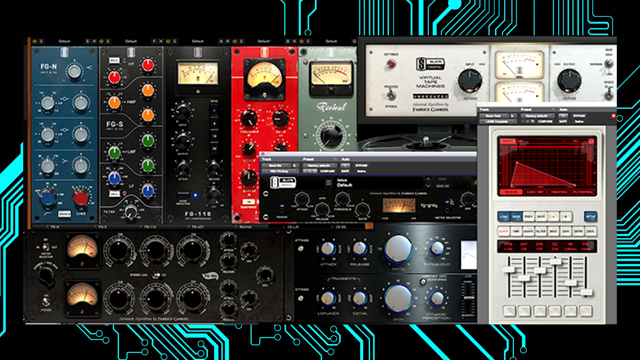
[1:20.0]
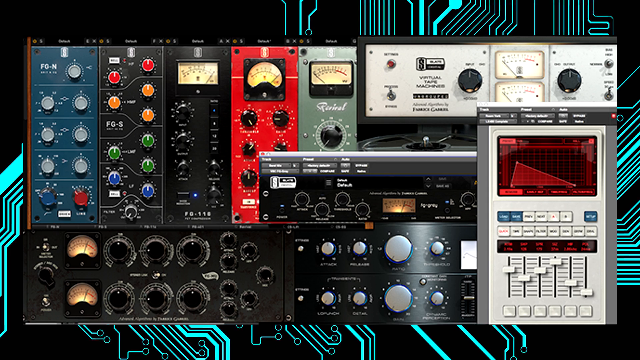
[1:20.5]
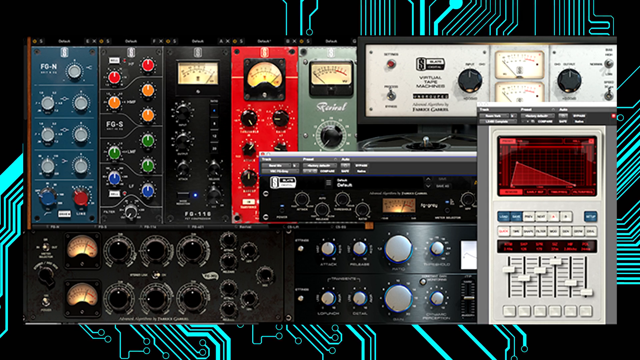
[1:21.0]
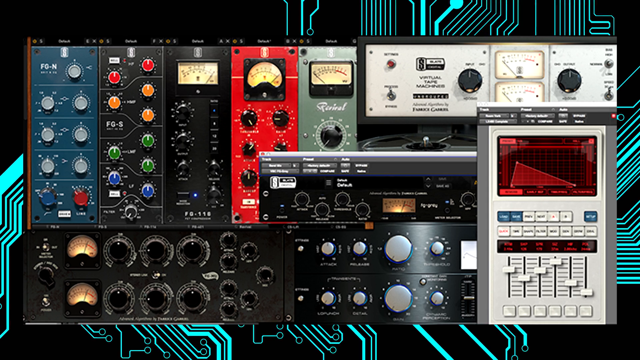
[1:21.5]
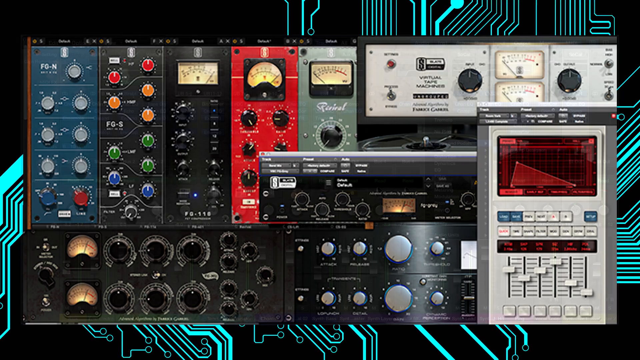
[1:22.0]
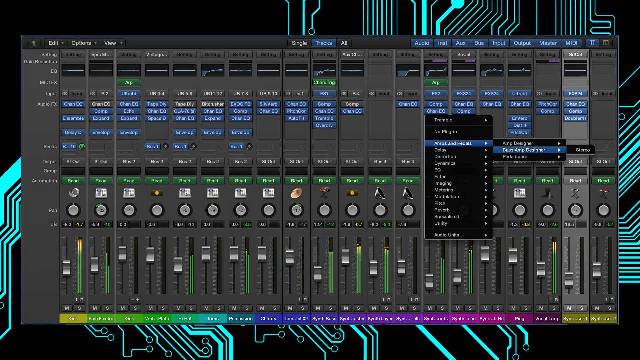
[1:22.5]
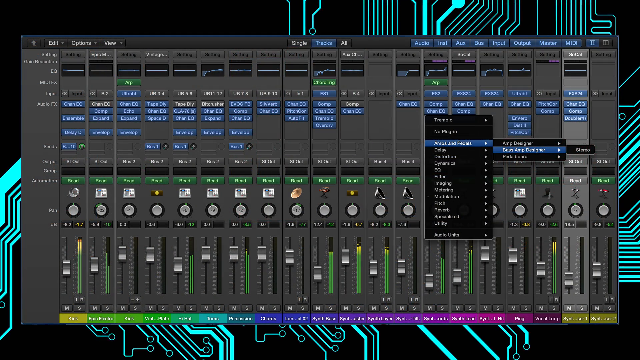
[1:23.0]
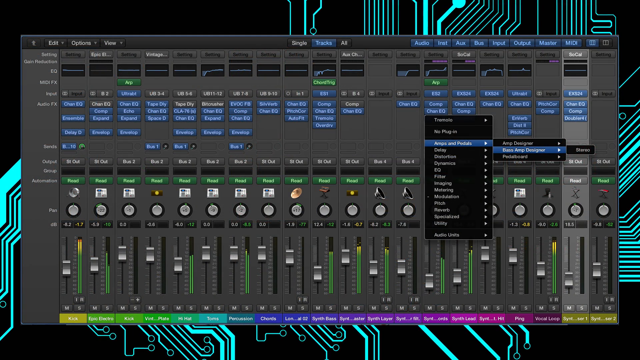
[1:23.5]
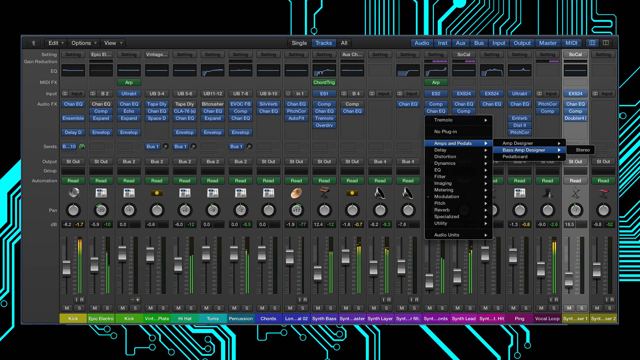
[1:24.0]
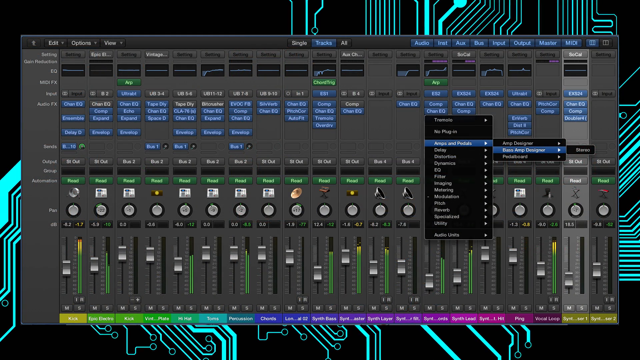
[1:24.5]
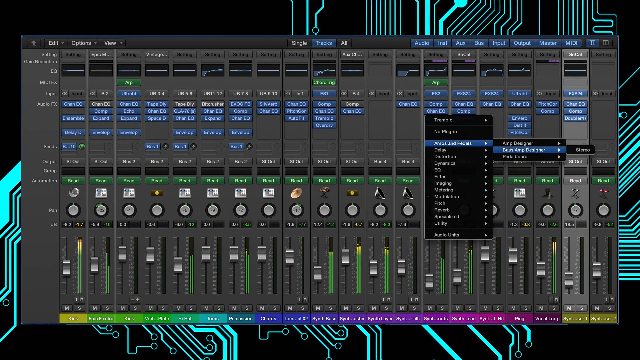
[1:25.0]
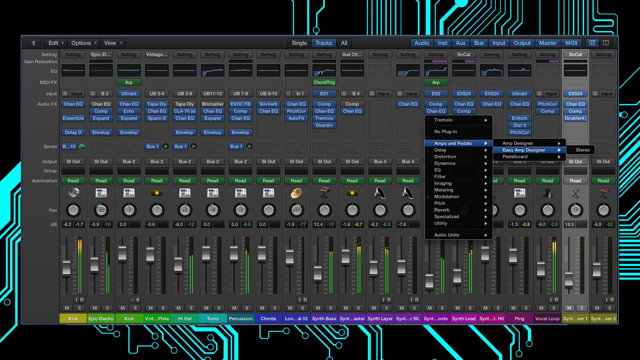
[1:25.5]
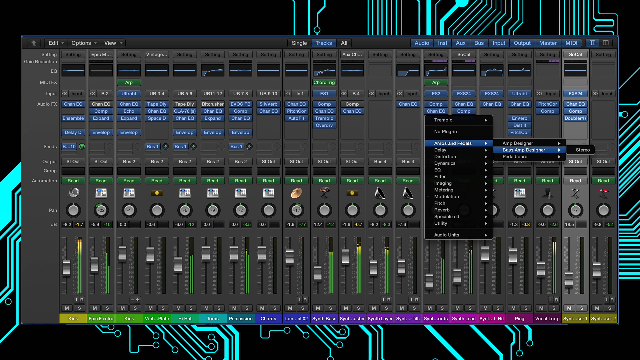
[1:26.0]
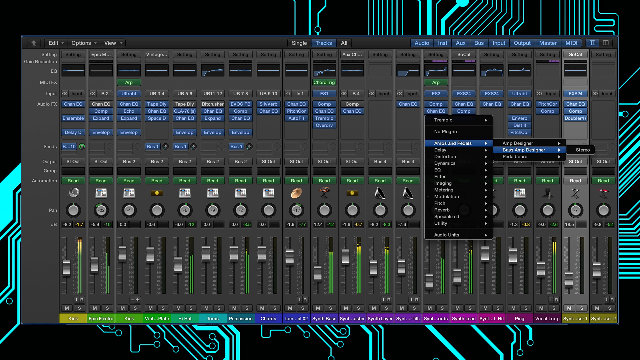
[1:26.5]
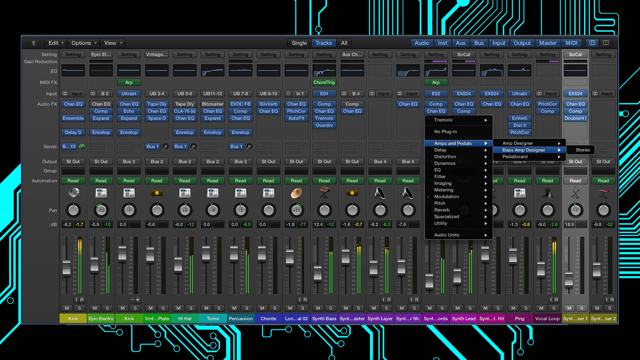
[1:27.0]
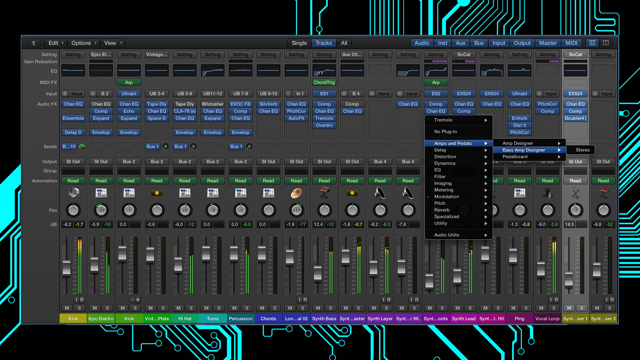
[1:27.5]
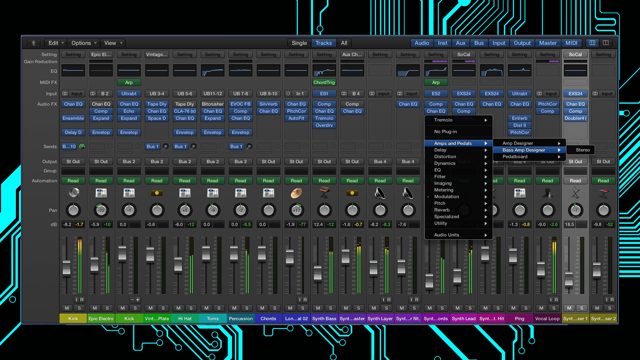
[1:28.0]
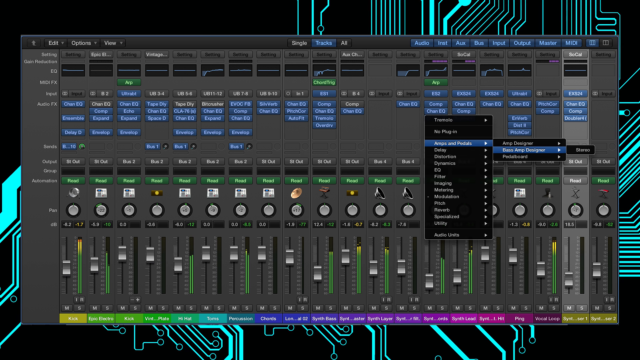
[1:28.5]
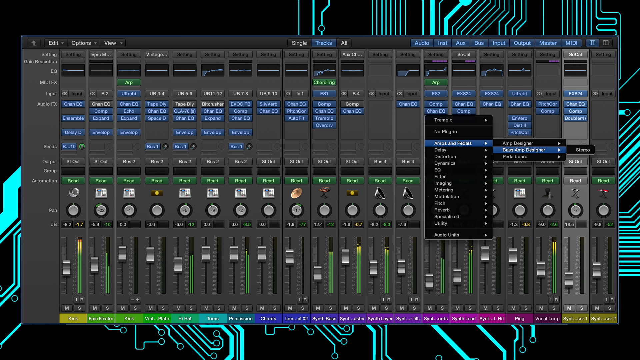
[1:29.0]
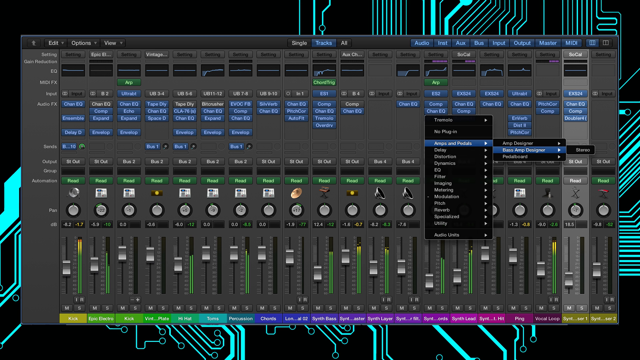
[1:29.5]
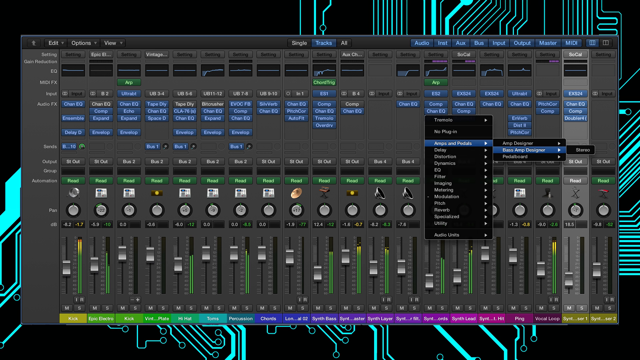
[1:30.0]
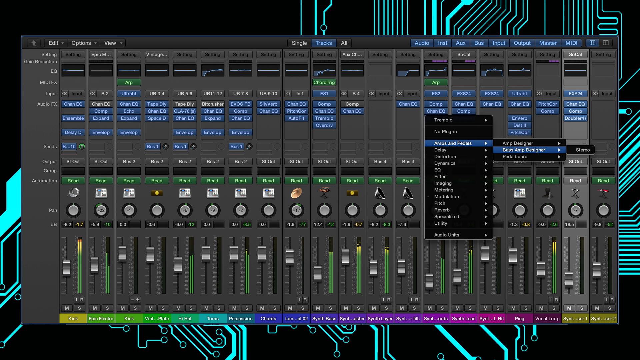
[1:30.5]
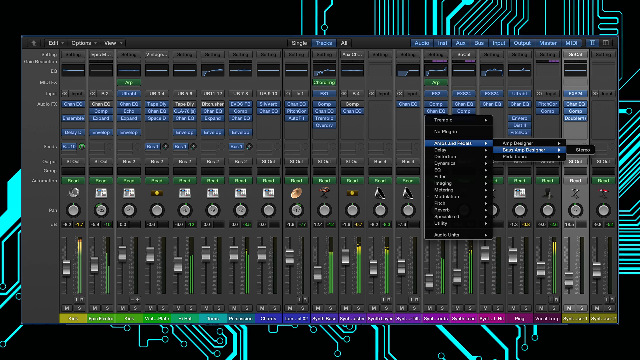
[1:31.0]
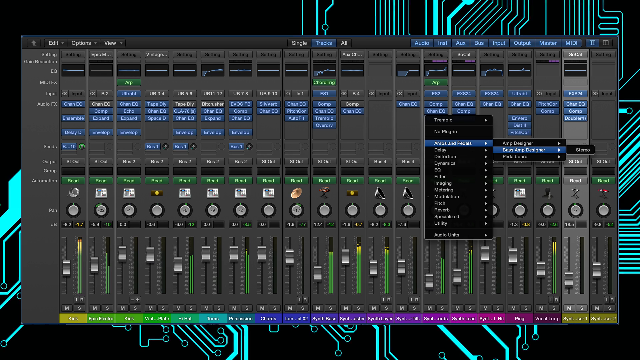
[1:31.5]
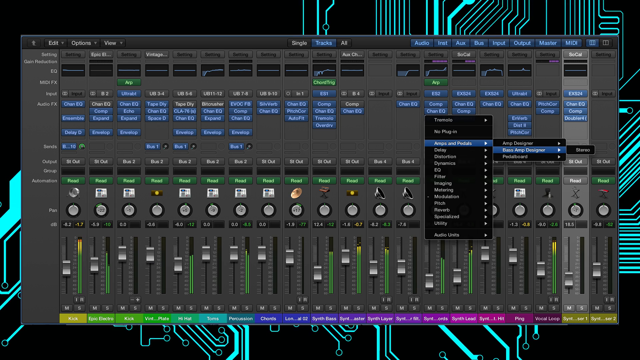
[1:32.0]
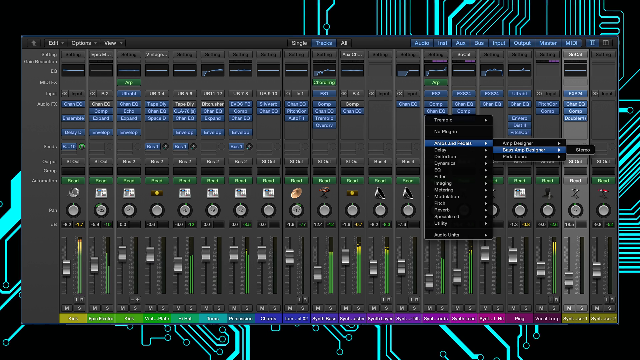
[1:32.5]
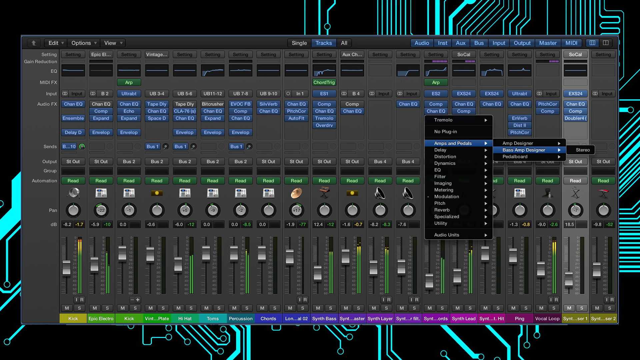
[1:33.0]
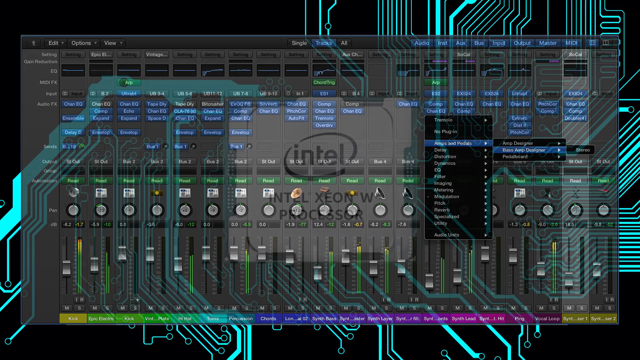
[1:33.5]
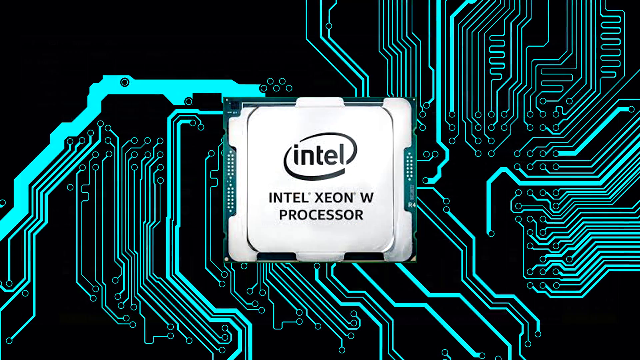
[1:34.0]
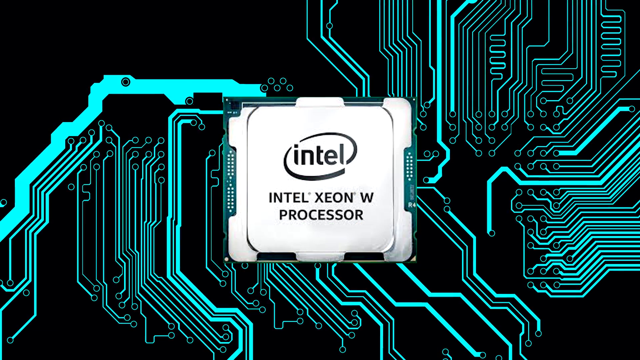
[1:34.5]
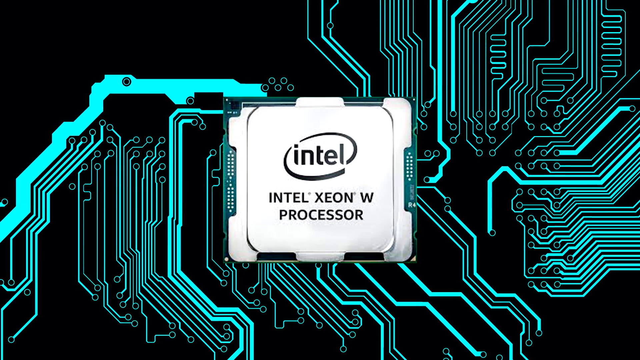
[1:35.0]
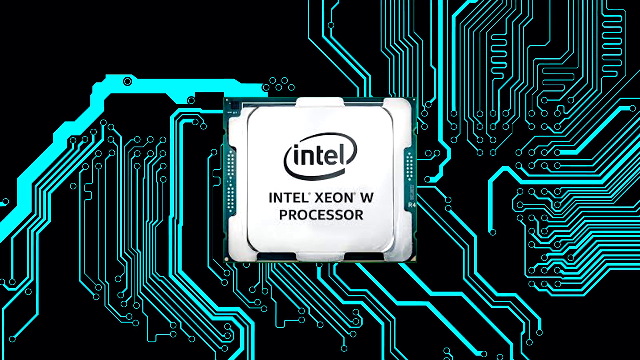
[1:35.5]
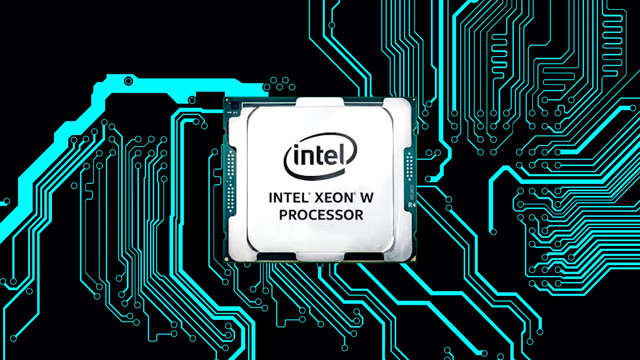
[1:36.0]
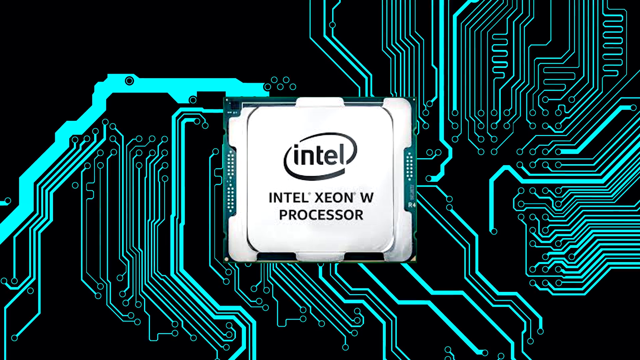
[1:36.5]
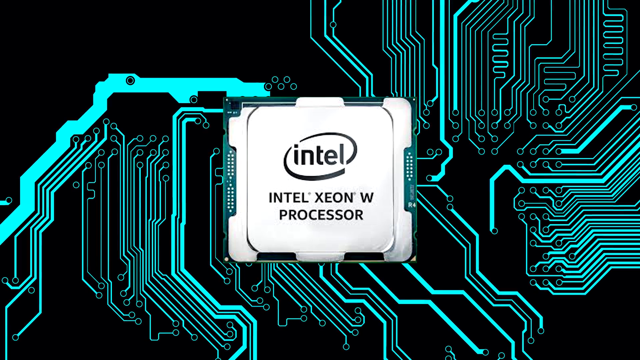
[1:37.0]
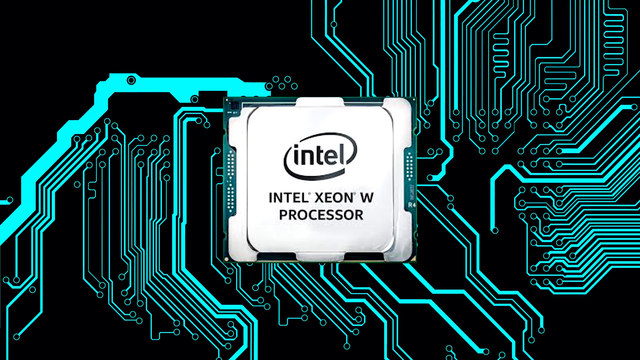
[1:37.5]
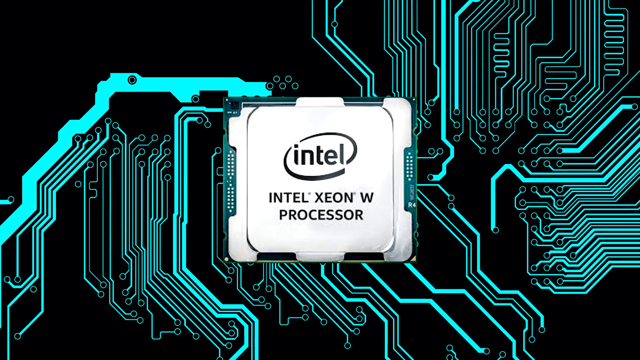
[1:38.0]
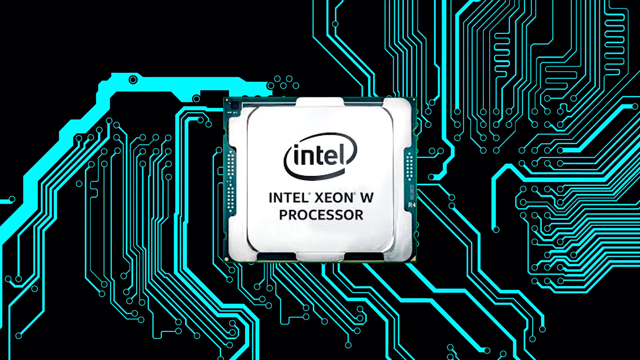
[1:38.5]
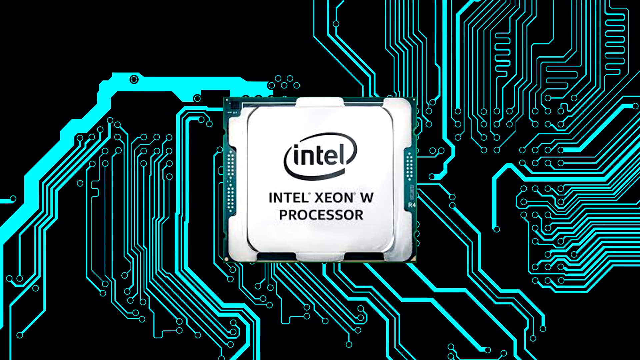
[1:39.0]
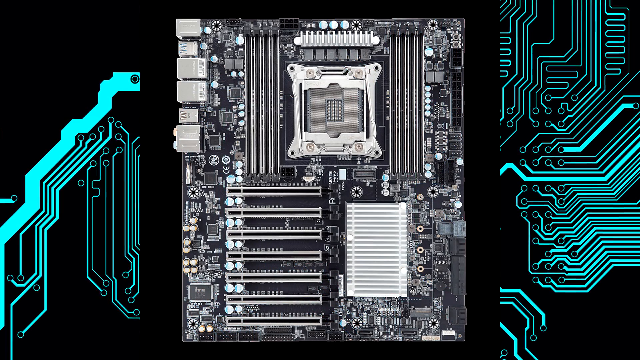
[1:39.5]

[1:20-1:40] The video continues to show the plugins with a close-up of a screen that apparently mimics the Mixing window in Pro Tools, showing the various channels, faders, and the plugins installed on each track. Someone inserts a plugin and has a plugin highlighted. The console is grayish-black, the plugins on each channel are highlighted in blue, and the faders show green for their volume, all against the futuristic Tron-like backdrop. The scene then fades to "Intel Xeon W processor", which flashes on screen in white like a logo, and a close-up view of the inside of the chip is shown.